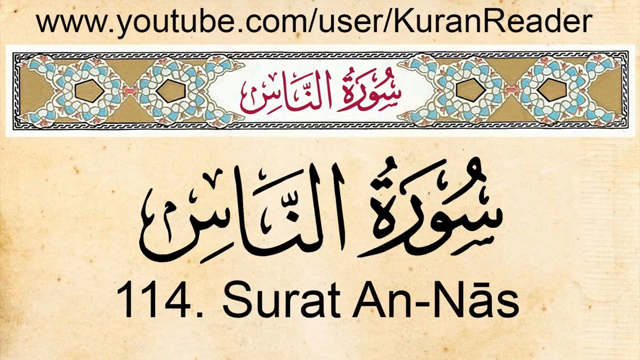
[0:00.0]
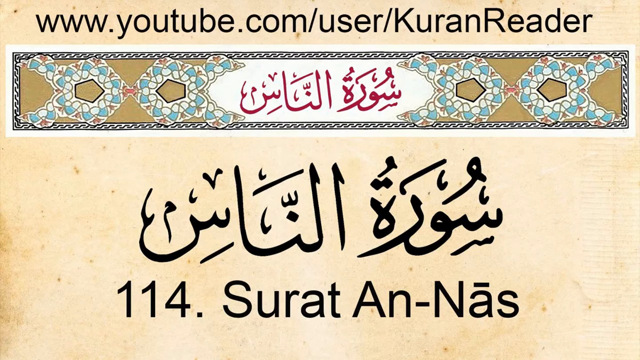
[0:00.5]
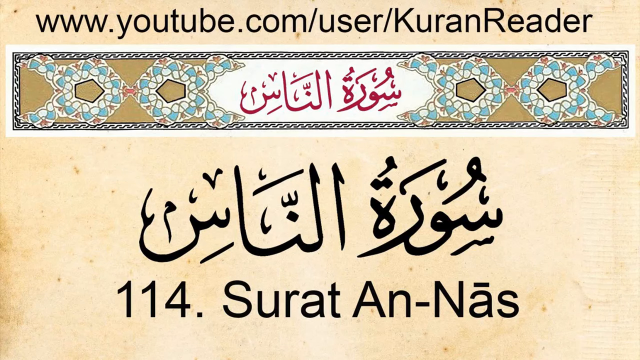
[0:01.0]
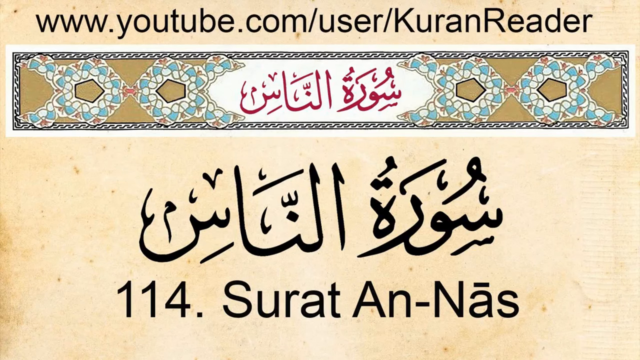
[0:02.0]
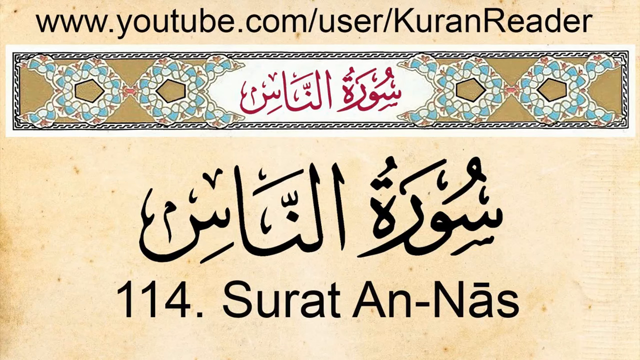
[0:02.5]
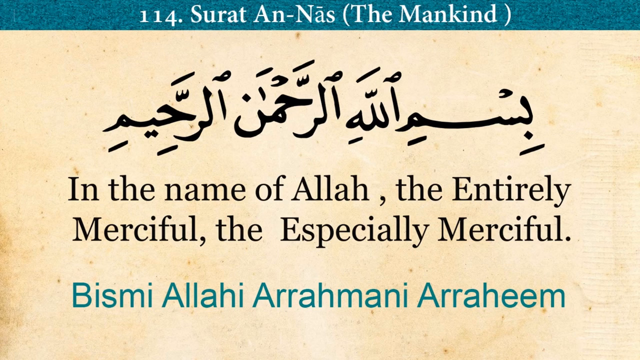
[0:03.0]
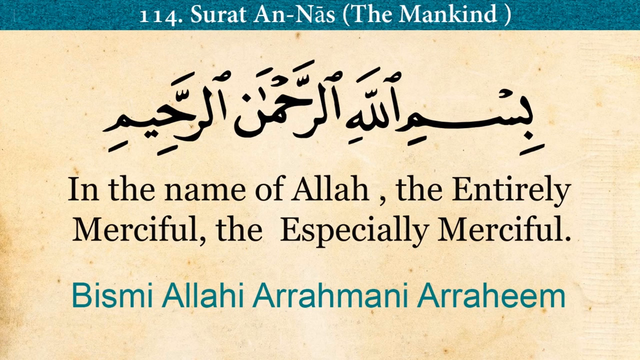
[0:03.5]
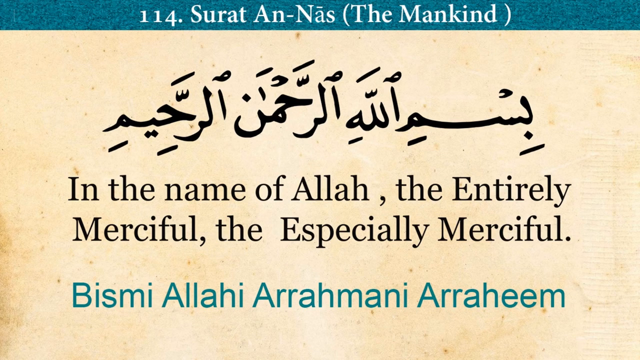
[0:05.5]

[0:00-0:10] The video opens on a slideshow page with a sort of old paper look. At the top it reads "www.youtube.com/user/KuranReader", and at the bottom "114. Surat An-Nas". Underneath the YouTube link is a small banner that looks like blue and white mosaic stone on an olive background. The slide then switches to one with the same background color but with a blue banner at the very top reading "114. Surat An-Nas (the mankind)", followed by the text "In the name of Allah the Entirely Merciful the Especially Merciful Bismi Allahi Arrahmani Arraaheem". The slide stays on screen for a while.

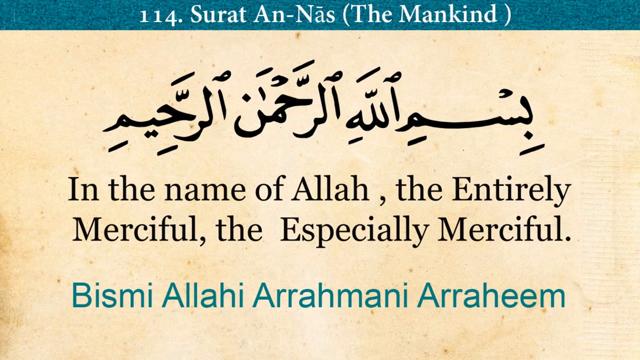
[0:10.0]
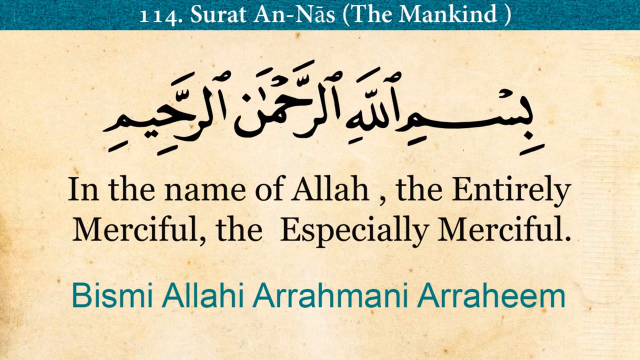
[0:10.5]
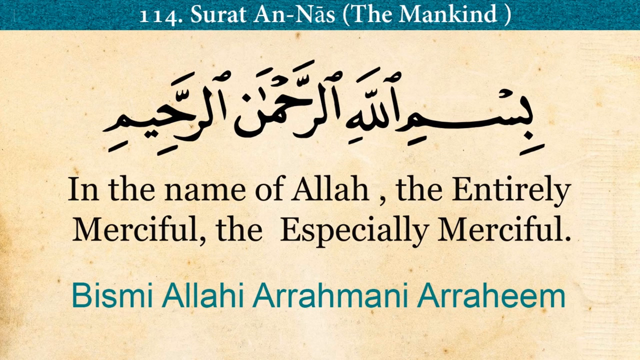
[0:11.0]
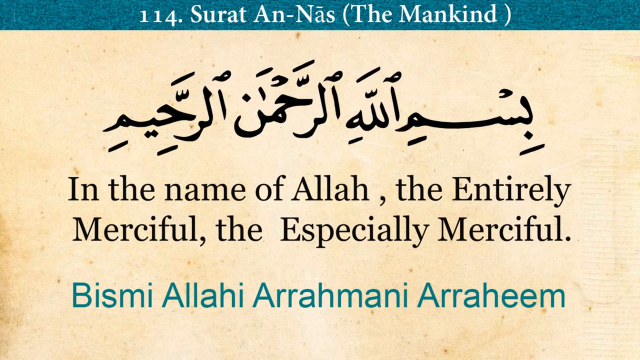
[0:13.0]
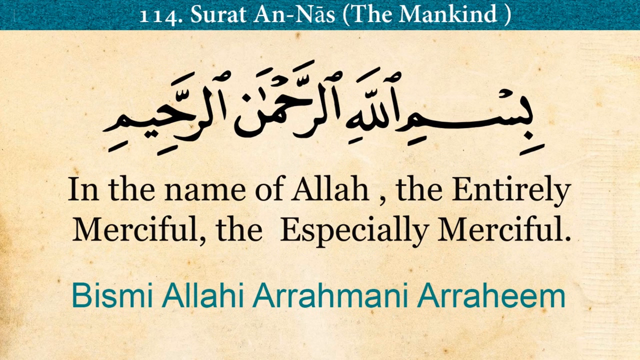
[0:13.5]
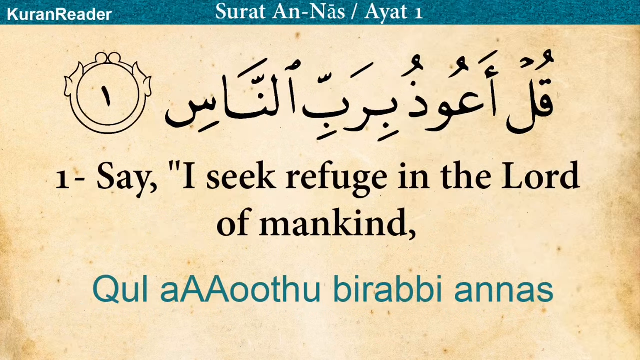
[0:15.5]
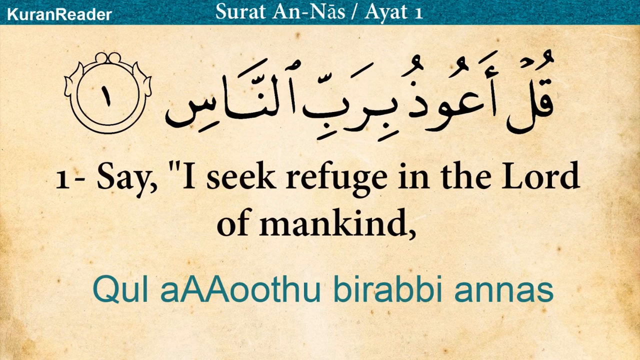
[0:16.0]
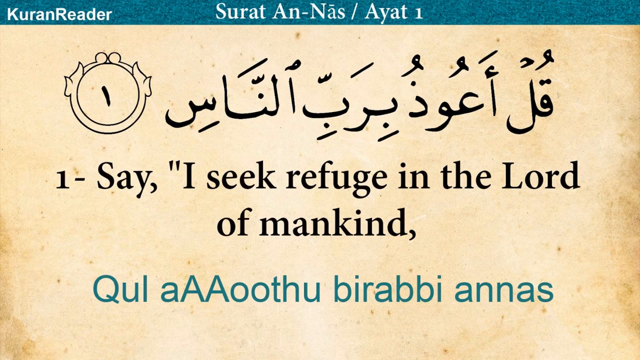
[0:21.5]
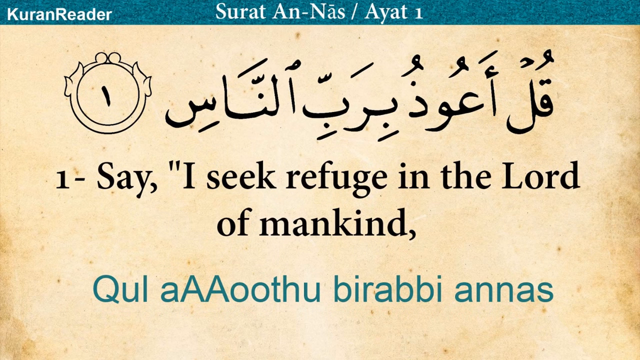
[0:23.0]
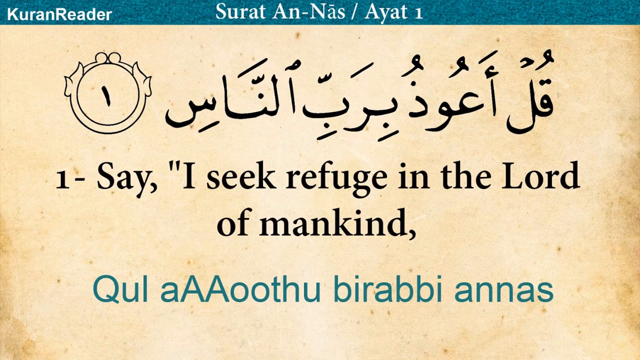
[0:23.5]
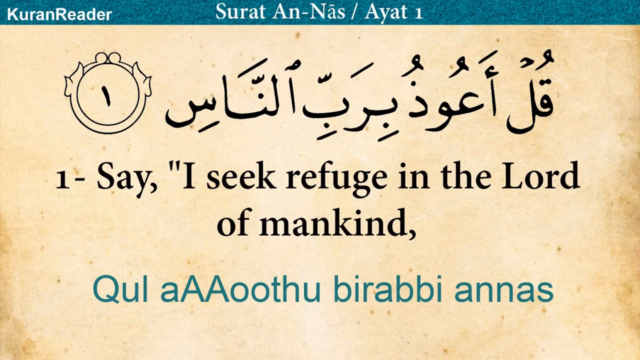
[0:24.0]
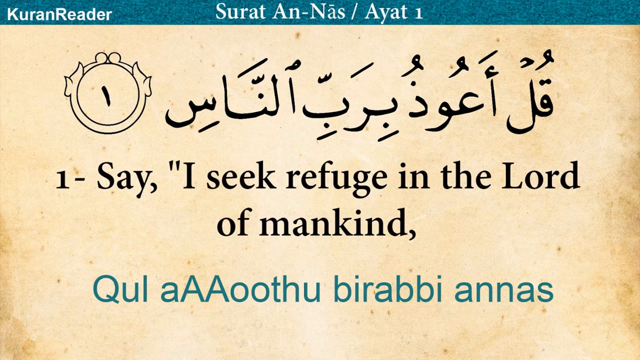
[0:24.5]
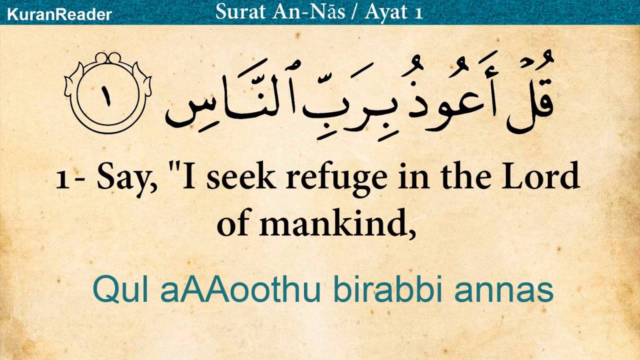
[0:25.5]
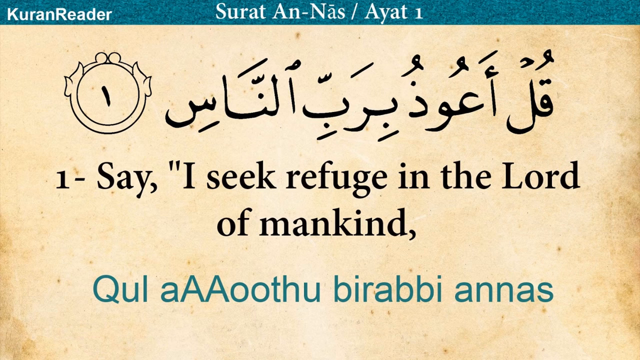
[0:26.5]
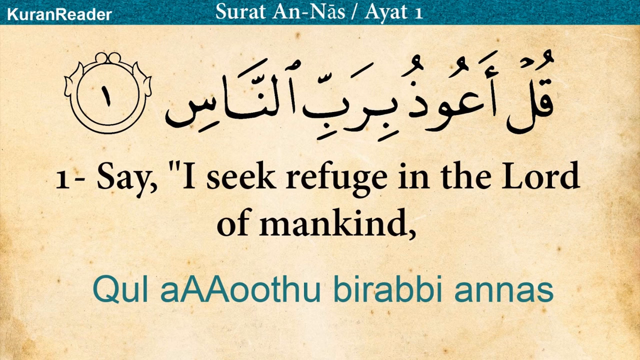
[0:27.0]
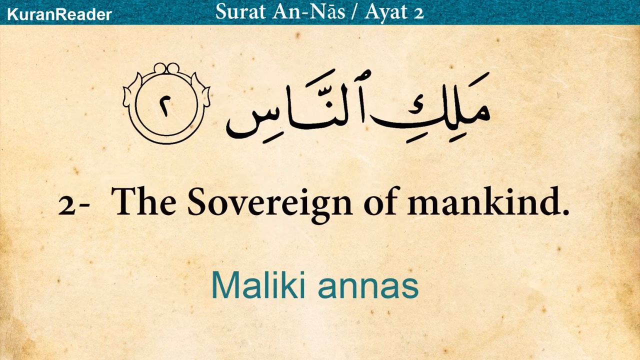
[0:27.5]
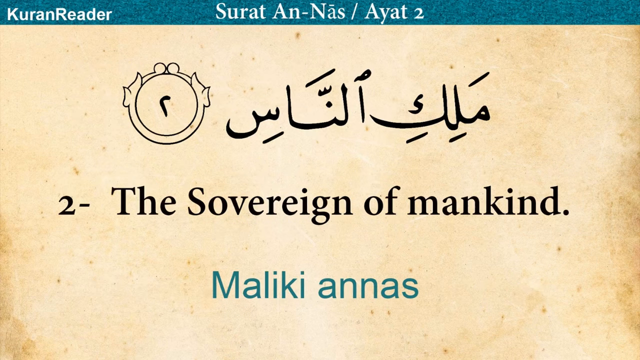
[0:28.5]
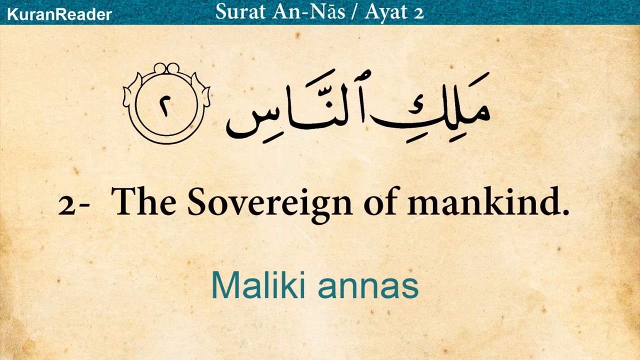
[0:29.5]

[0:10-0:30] The slide changes. In the upper left-hand corner is "KuranReader", and in the center of the top is "Surat An-Nas / Ayat 1". At the top of these screens there is text in Arabic, and to its left is a small circular image that kind of looks like a watch face, but not quite. Underneath is text reading "1 - Say, I seek refuge in the Lord of Mankind", with the same text translated at the bottom. The slide then changes again to read "2 - The Sovereign of Mankind". The text in the center of the screen is all black, and the translation at the bottom is the same teal color as the banner at the very top of the screen. The banner stays the same for both slides, except that the second reads Ayat 2 rather than Ayat 1.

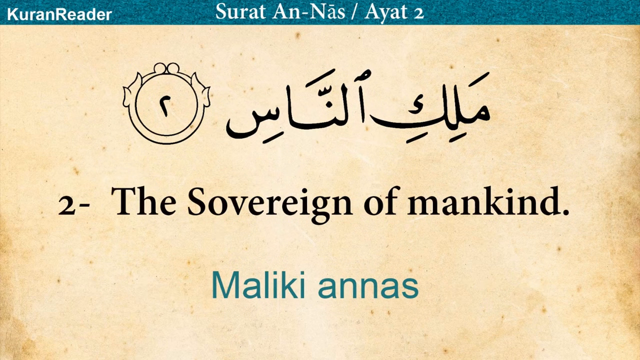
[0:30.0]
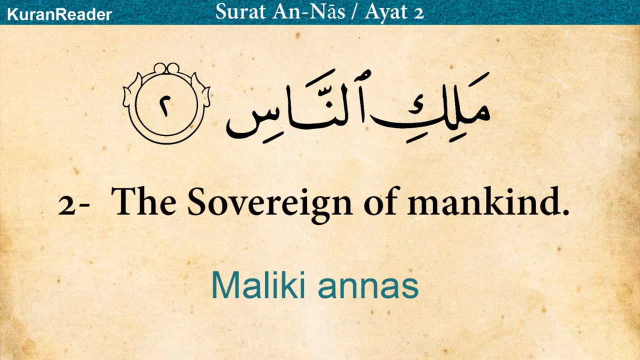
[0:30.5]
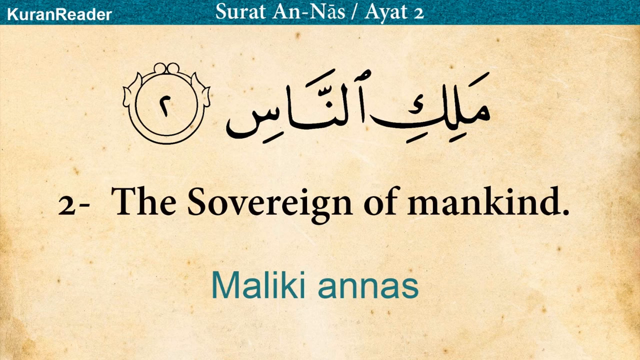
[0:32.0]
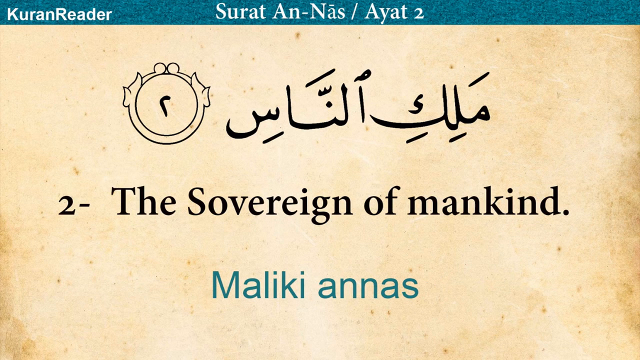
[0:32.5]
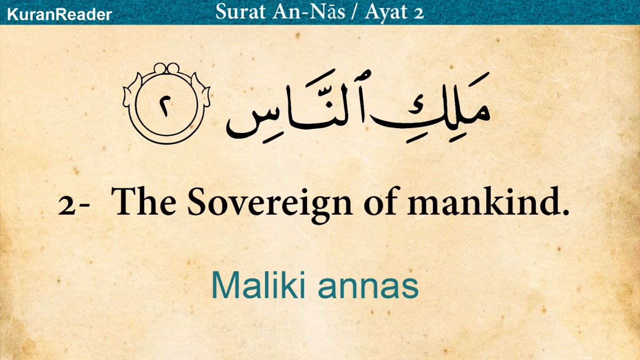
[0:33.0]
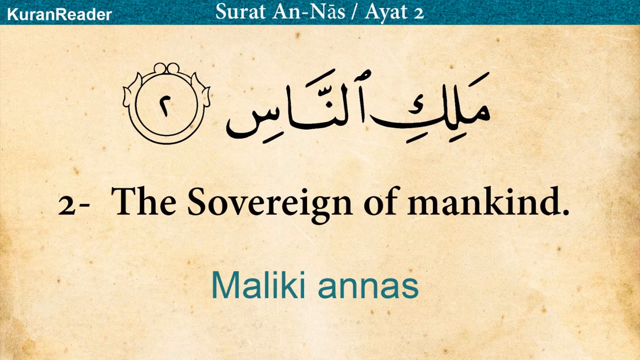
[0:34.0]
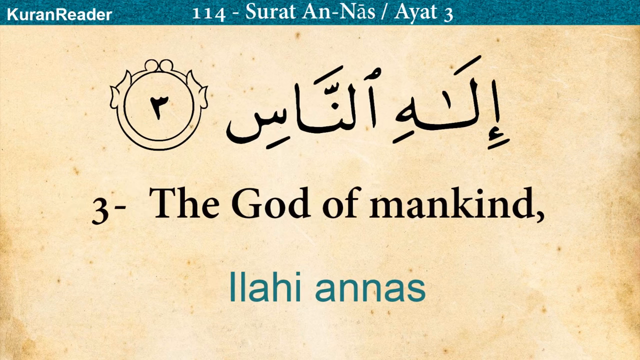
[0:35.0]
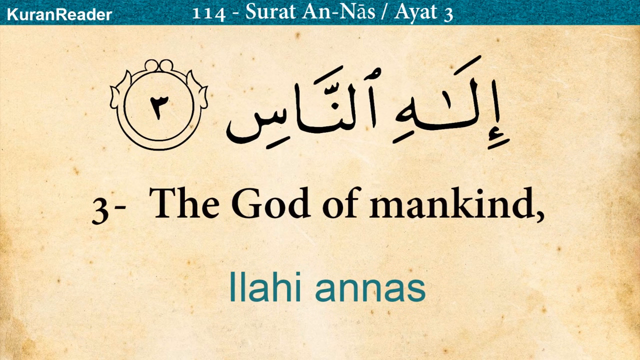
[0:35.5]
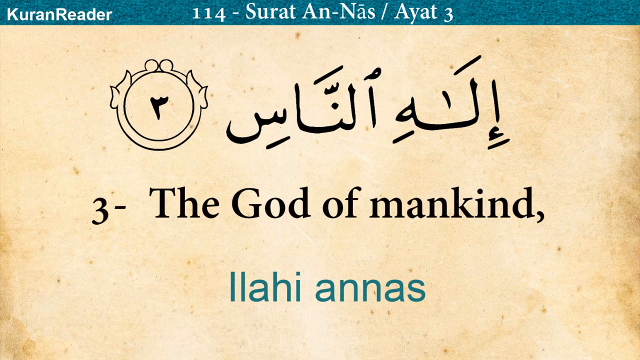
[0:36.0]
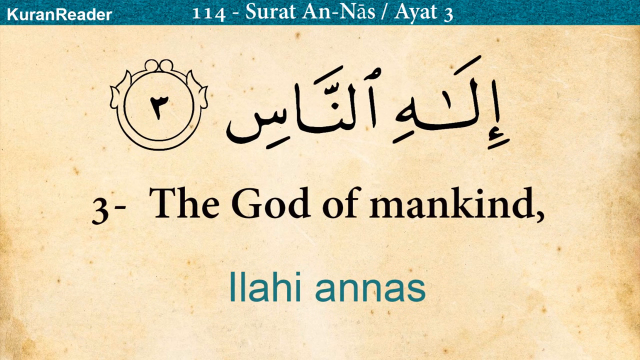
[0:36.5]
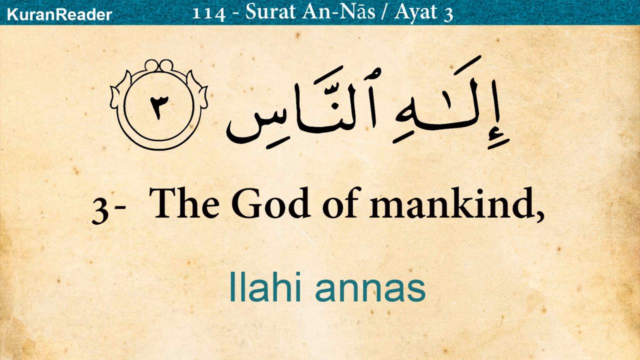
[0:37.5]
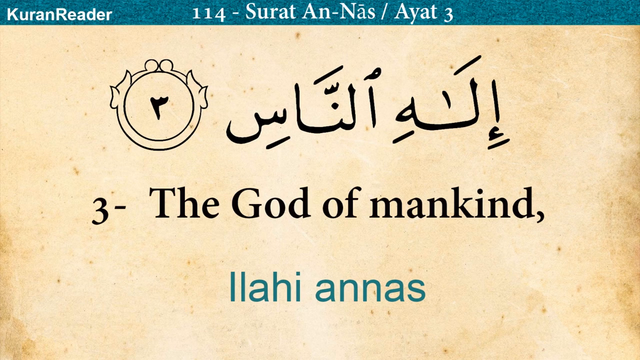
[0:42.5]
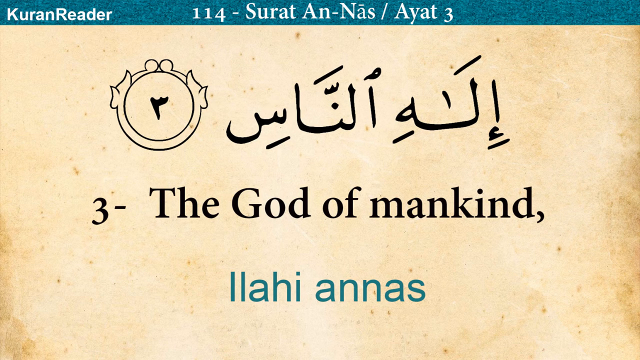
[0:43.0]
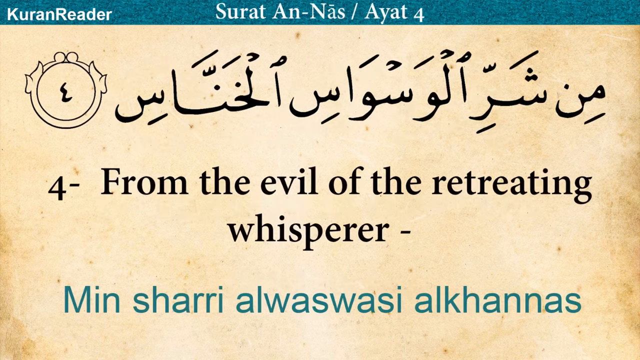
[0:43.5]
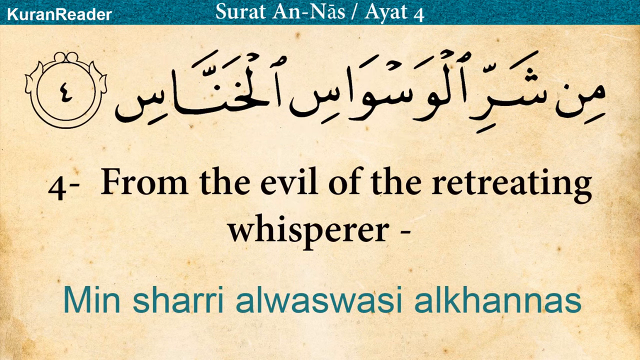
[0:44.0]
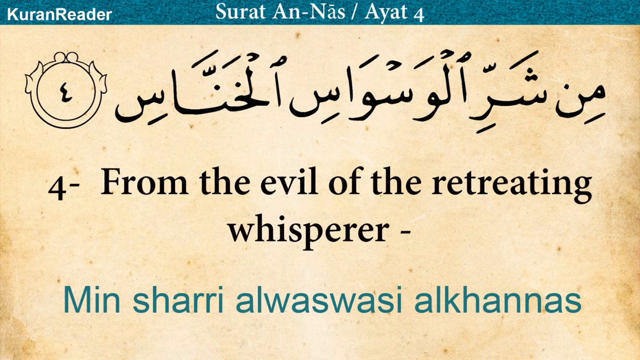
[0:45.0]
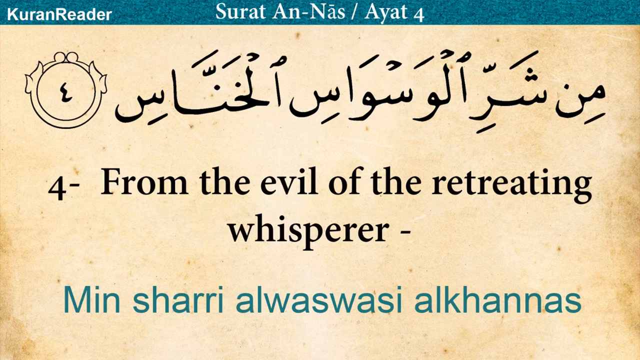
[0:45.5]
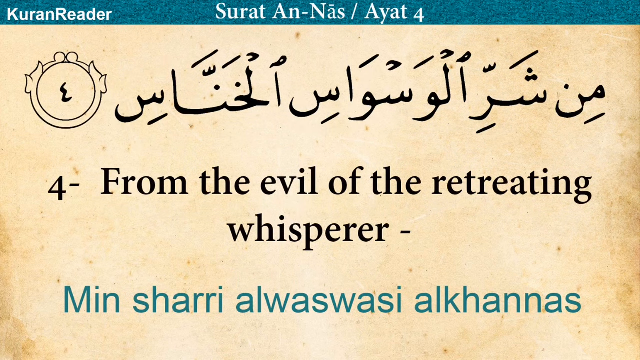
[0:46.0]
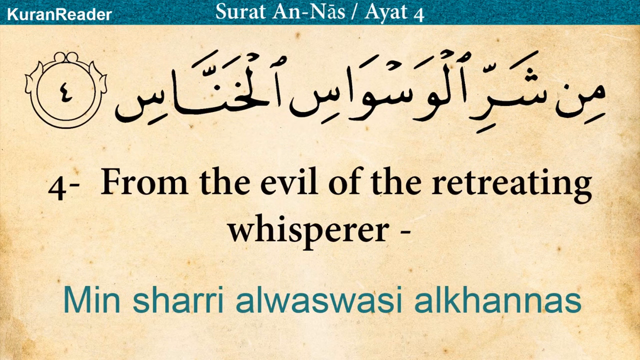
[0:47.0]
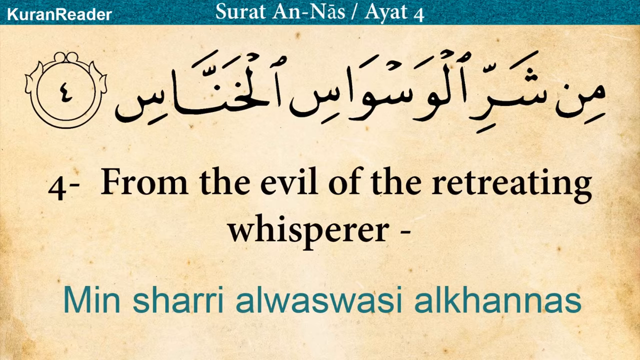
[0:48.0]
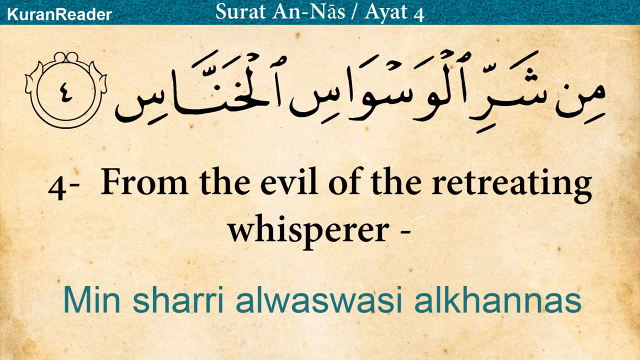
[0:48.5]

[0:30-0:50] Next comes Ayat 3, with the top of the screen changing accordingly. The black text reads "3, the God of Mankind", with a short translation at the very bottom of the screen. It then changes to Ayat 4, with the text "Ayat 4, From the Evil of the Retreating Whisperer". The slideshow seems to explain concepts from the Qur'an. The channel name Kuran Reader is spelled with a K rather than a Q. Each slide stays on screen for a good period of time.